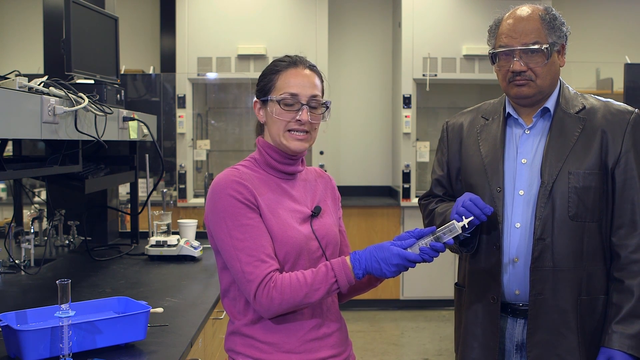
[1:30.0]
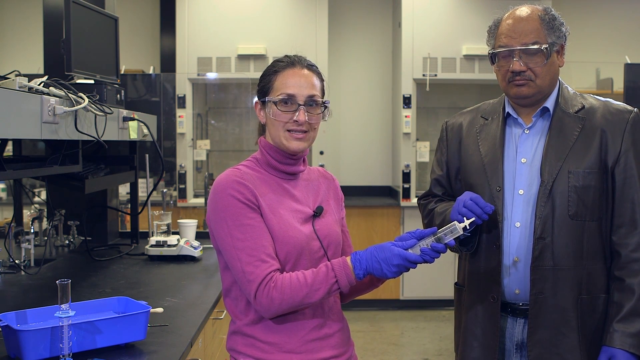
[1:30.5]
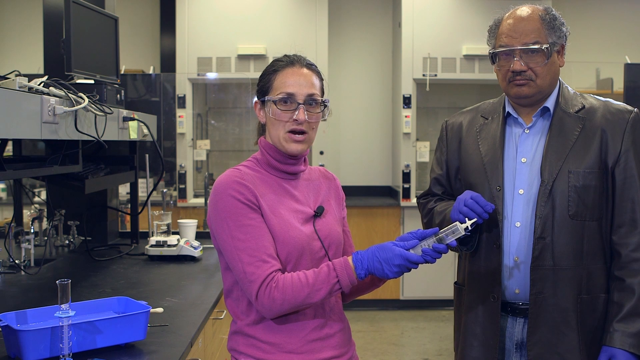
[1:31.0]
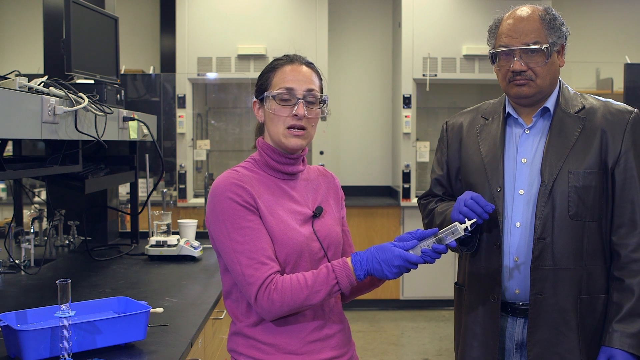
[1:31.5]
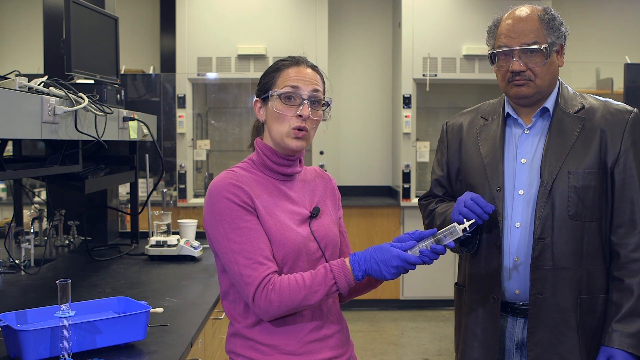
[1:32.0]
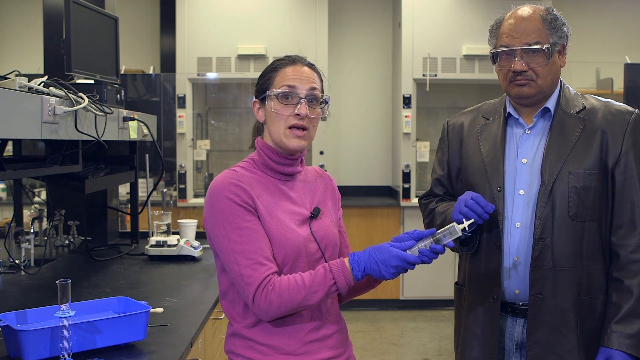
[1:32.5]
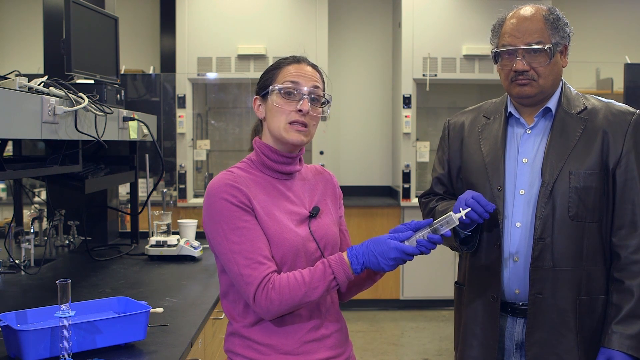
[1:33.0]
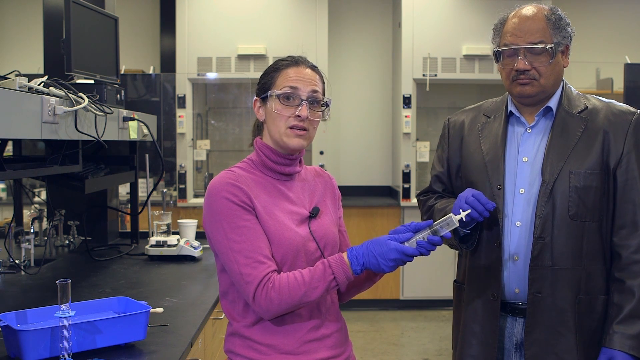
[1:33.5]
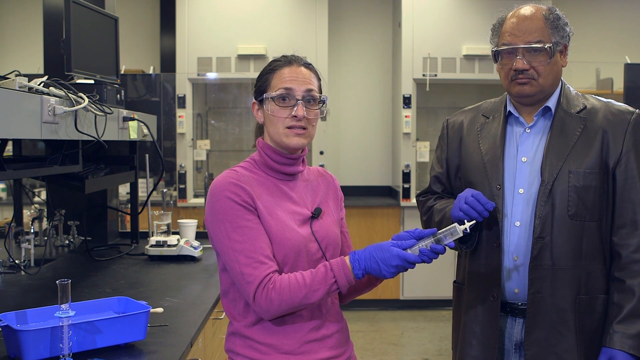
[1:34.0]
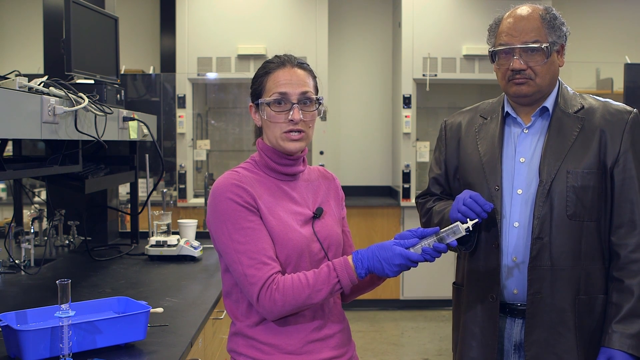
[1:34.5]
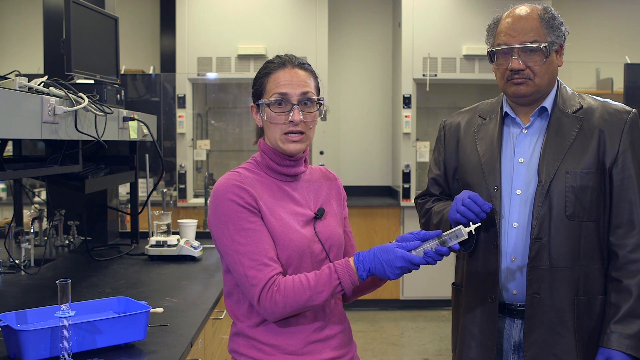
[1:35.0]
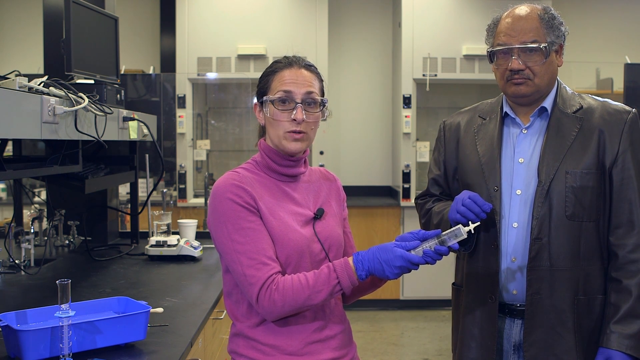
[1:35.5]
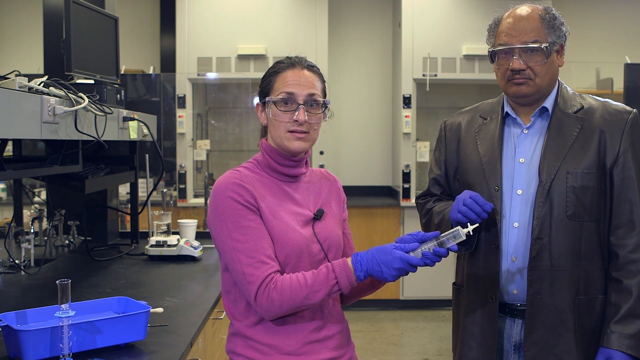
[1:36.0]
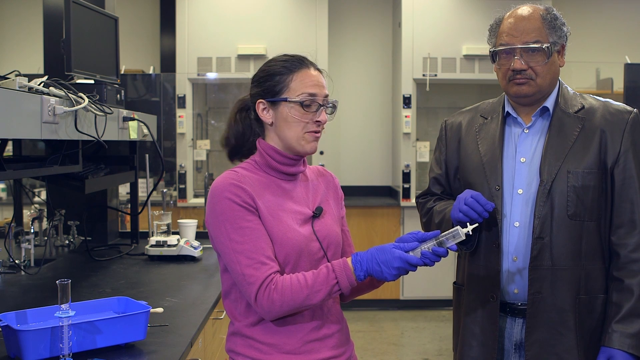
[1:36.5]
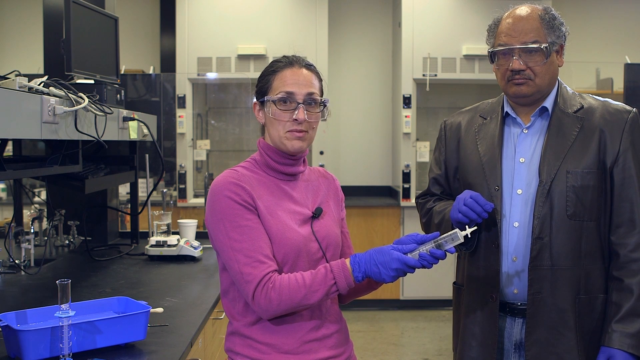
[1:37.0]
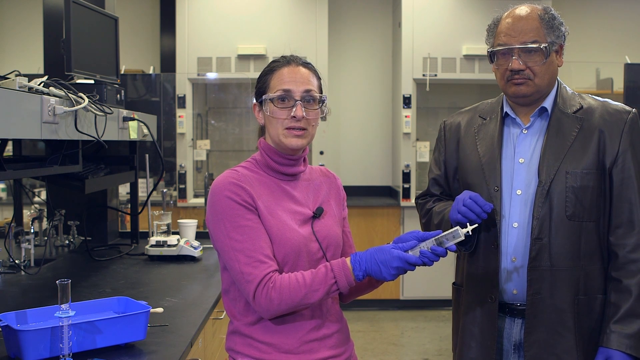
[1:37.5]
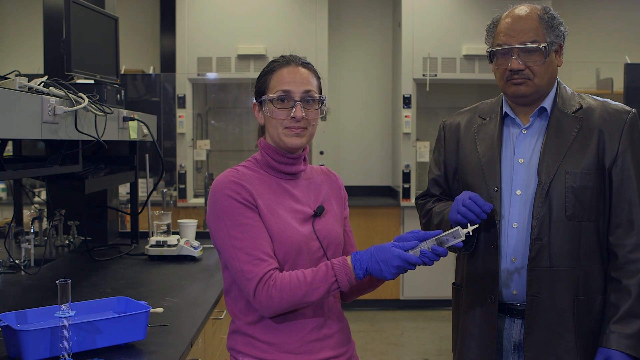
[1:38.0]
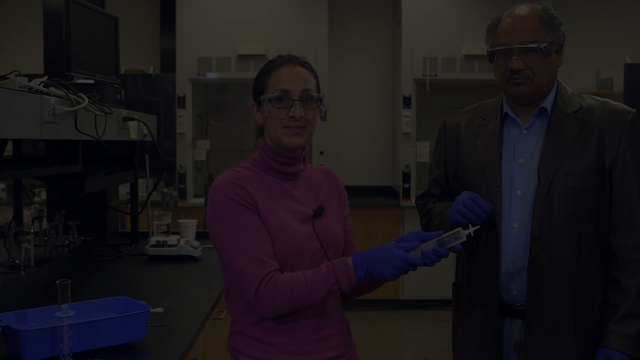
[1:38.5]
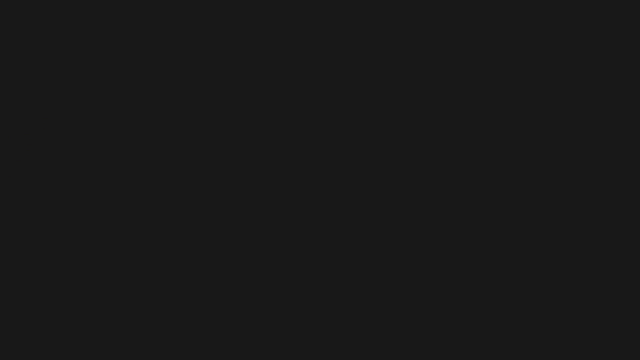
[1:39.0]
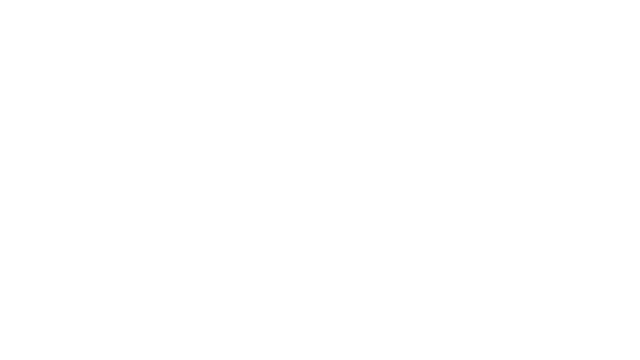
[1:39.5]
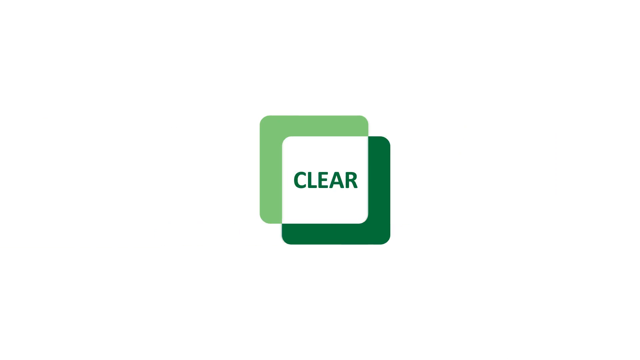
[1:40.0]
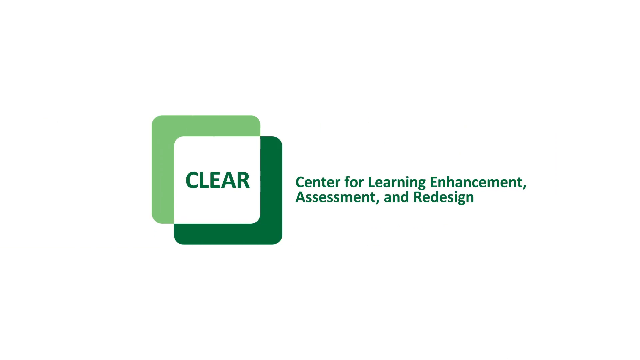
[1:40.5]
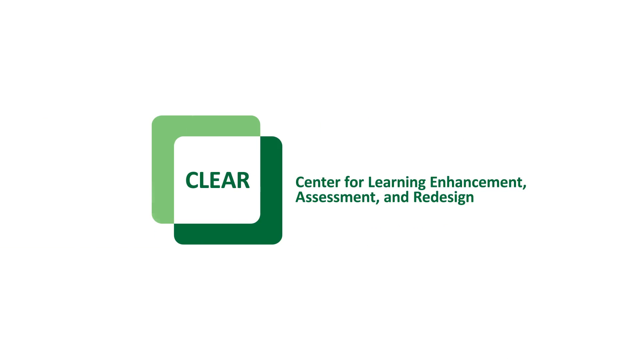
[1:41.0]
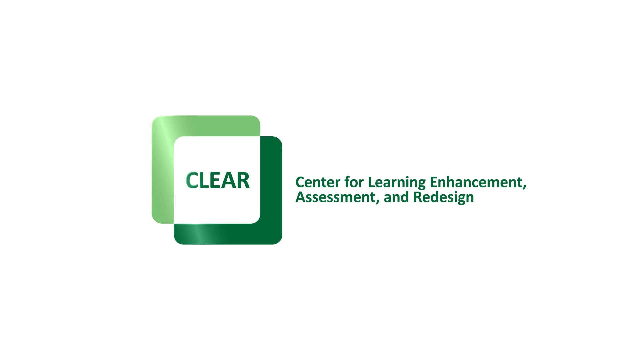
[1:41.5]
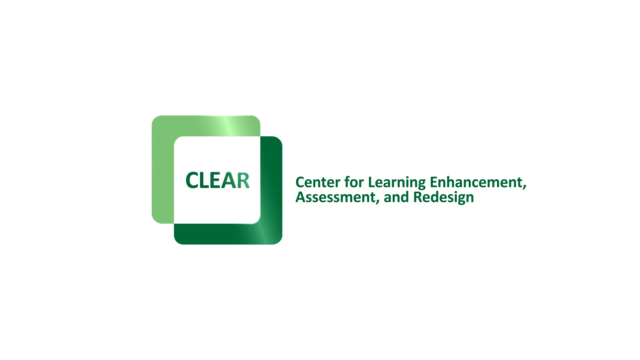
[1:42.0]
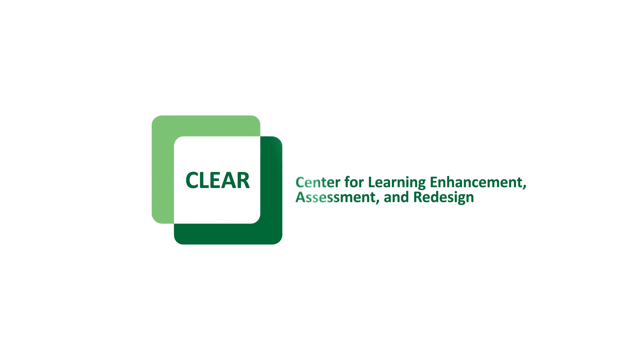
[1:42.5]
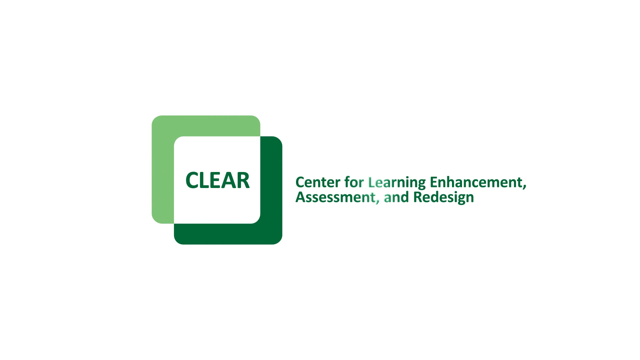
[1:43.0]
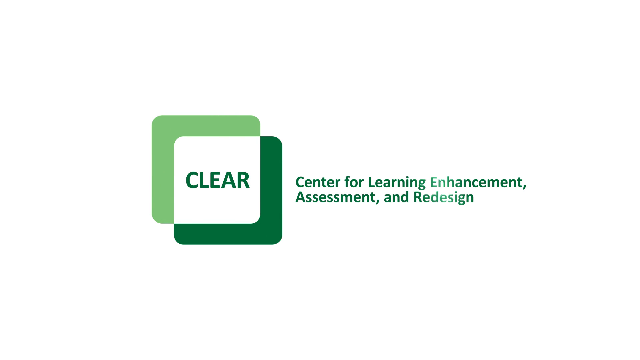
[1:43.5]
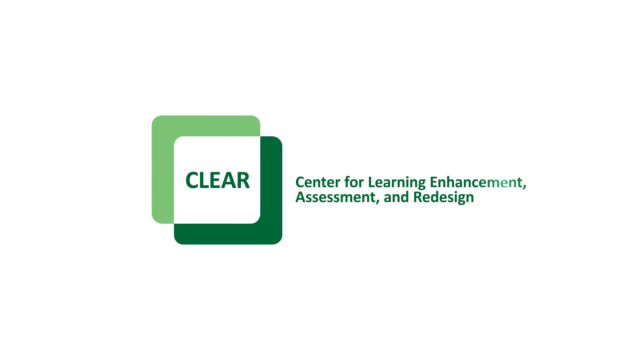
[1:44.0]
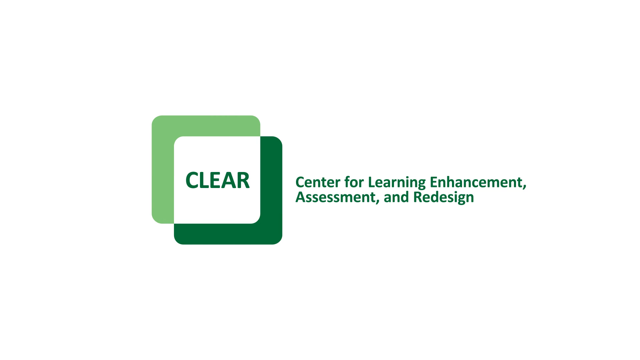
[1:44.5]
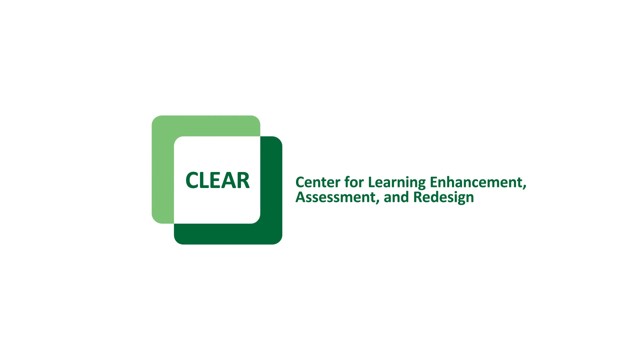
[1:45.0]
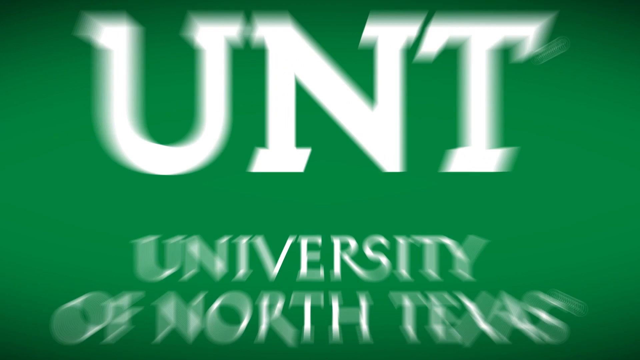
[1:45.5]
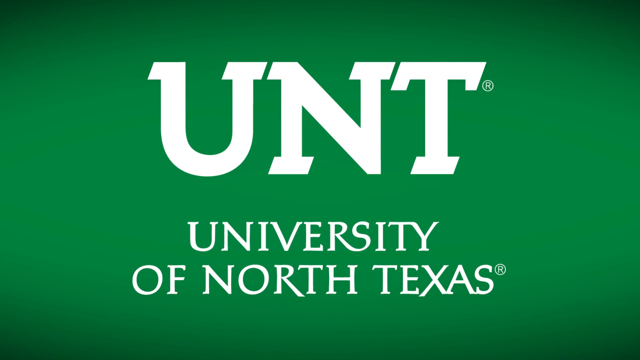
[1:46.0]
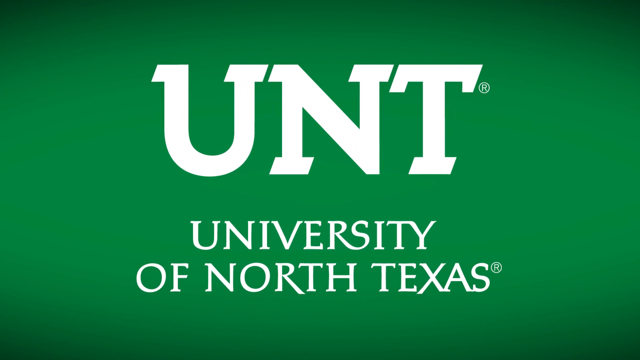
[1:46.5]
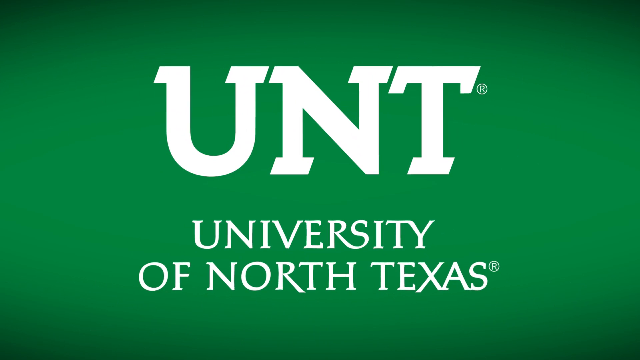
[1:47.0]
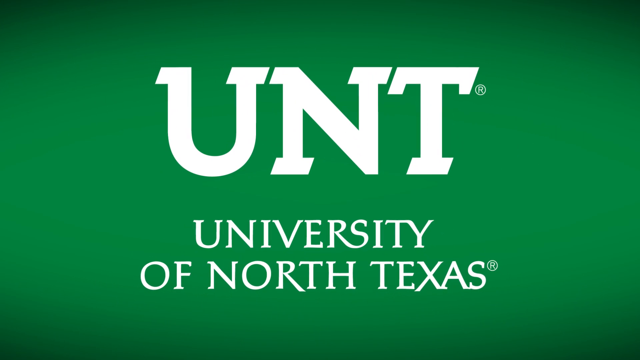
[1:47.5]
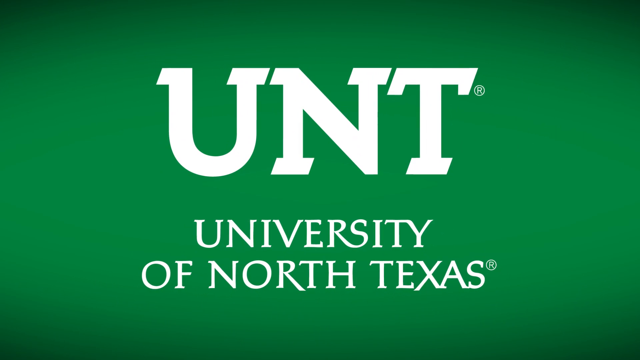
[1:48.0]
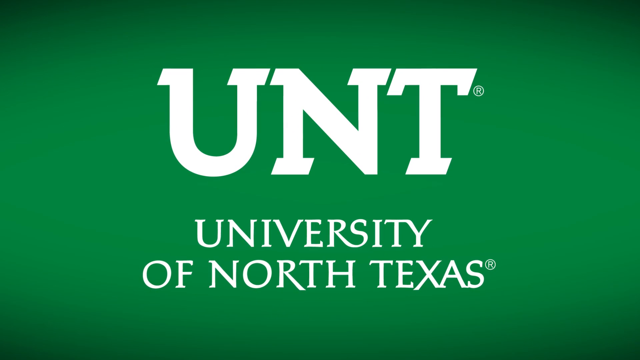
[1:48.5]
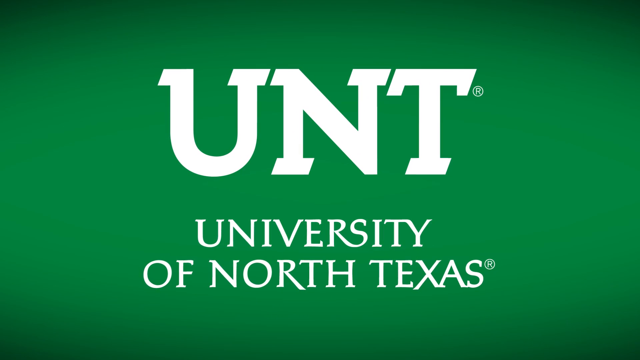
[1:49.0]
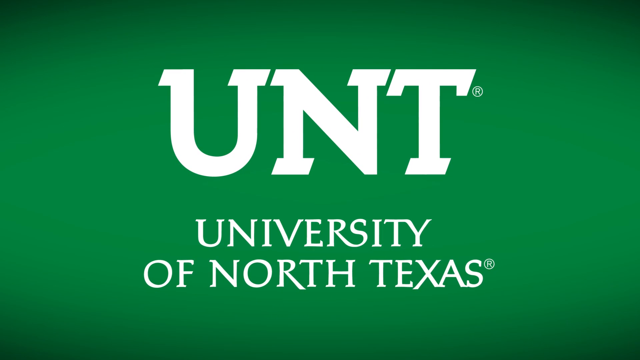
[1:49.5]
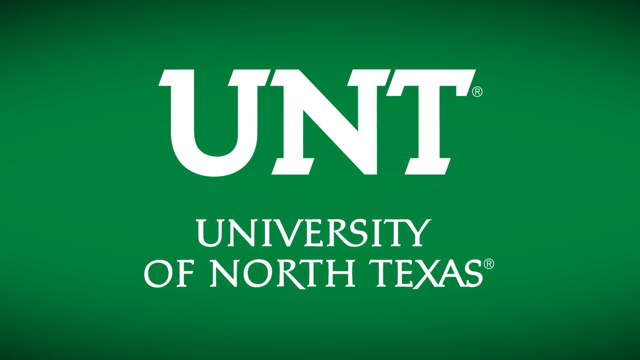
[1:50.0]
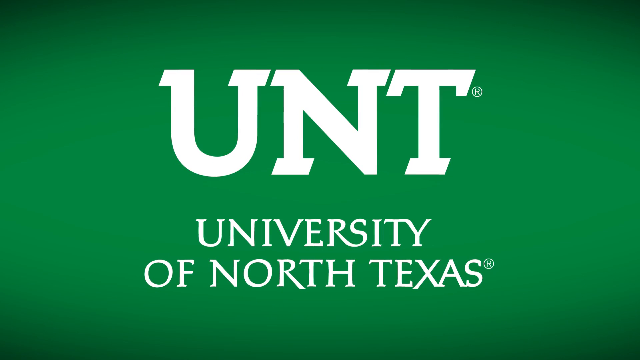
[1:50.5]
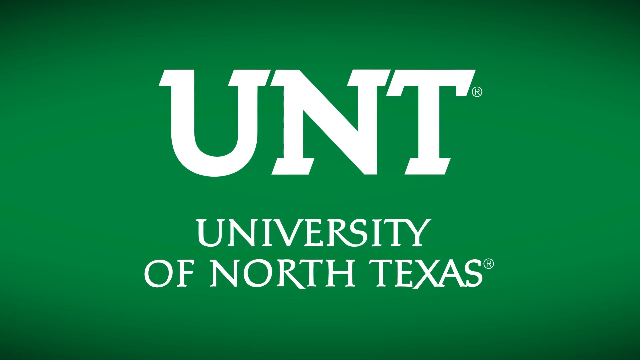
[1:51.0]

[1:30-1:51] The woman is still holding the syringe out, now mostly in both hands, as they stand inside the laboratory. The man stands and stares at the camera as the woman talks, with one hand up to his chest, and doesn't move. At the end of the video, two squares pop up that look like a logo: a dark green square and a light green square, with a white clear square over both, and in the middle it says "clear." Next to that it says "Center for Learning Enhancement, Assessment, and Redesign." The final screen is green and says "UNT" in large white capital letters, with "University of North Texas" in capital letters underneath.